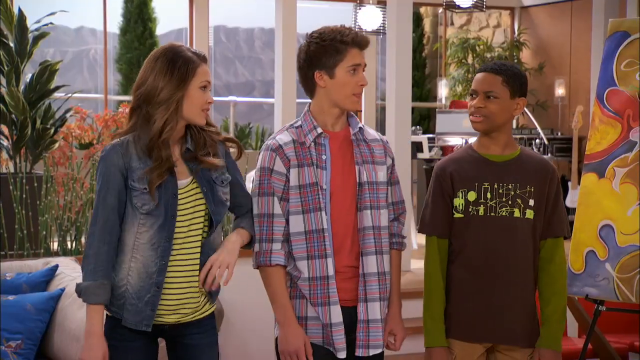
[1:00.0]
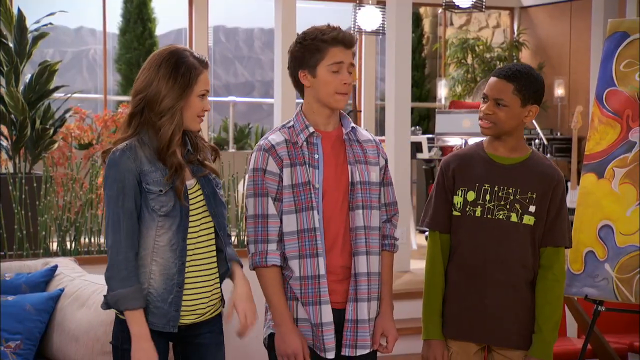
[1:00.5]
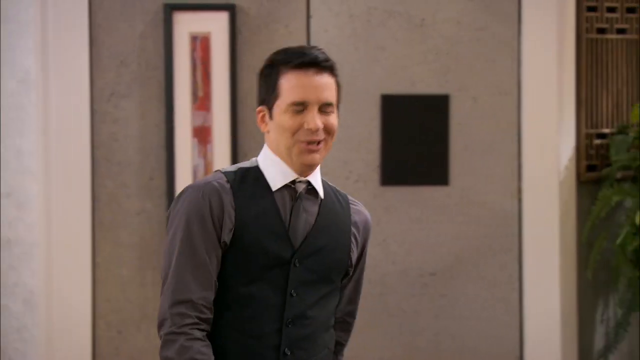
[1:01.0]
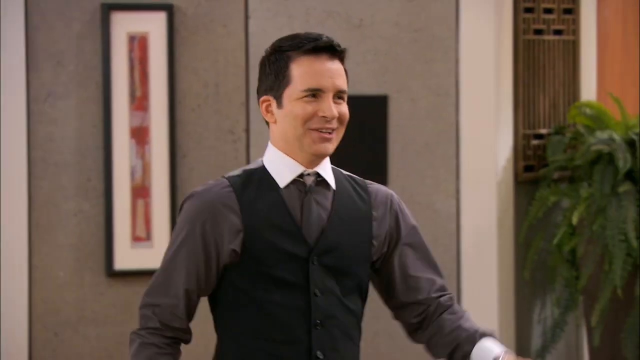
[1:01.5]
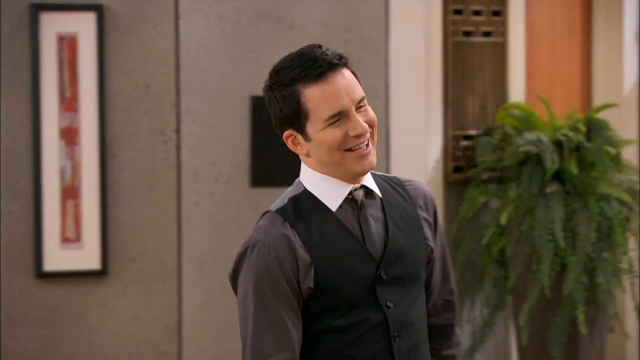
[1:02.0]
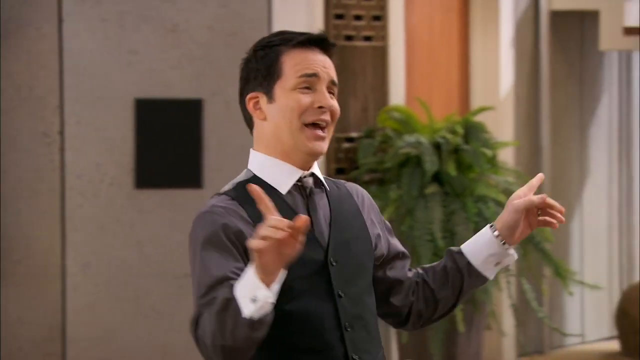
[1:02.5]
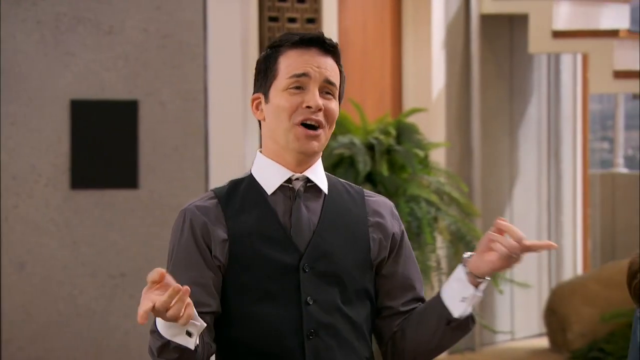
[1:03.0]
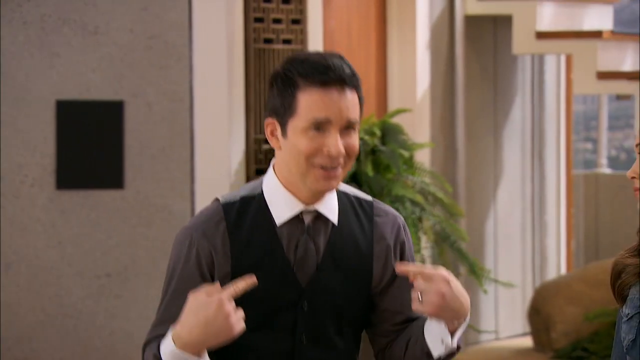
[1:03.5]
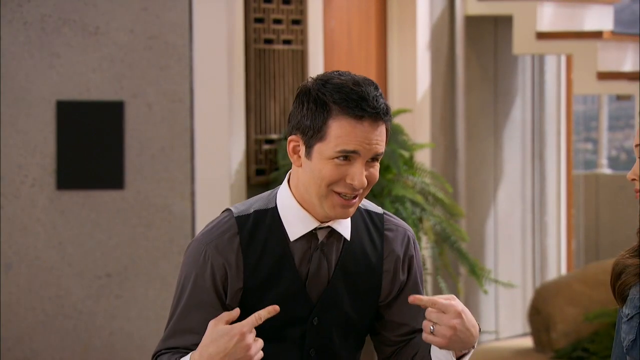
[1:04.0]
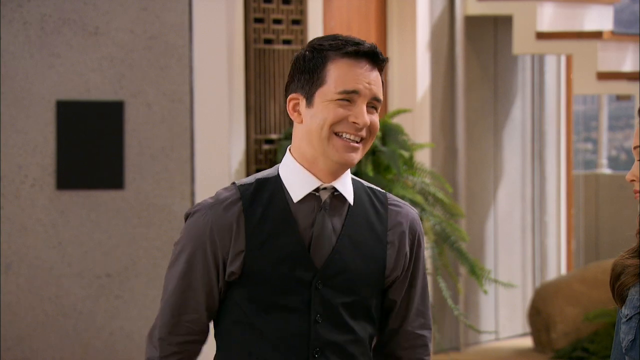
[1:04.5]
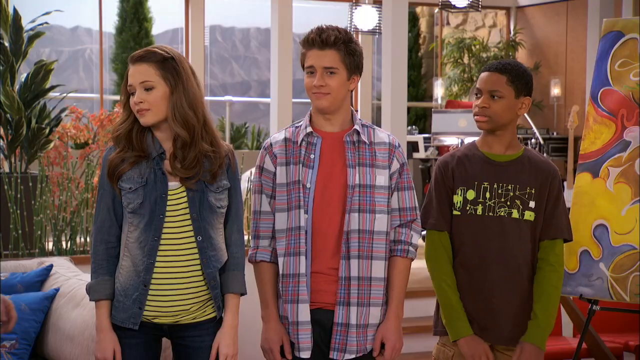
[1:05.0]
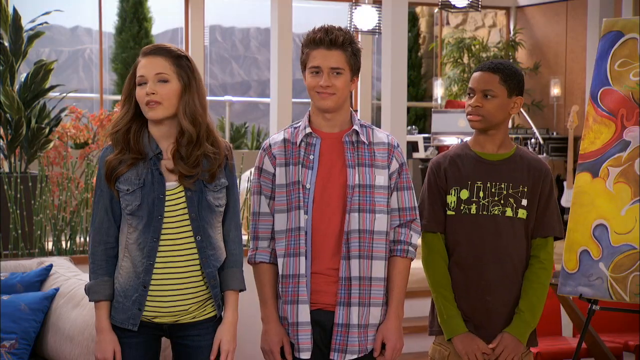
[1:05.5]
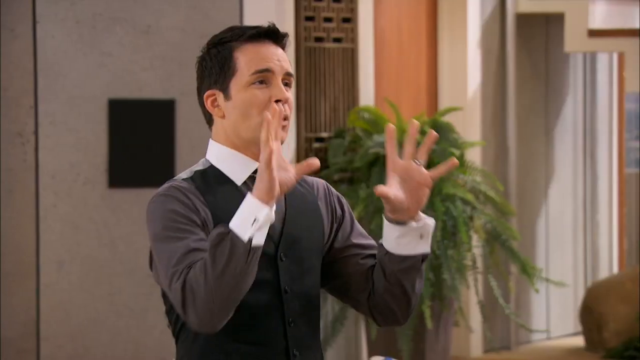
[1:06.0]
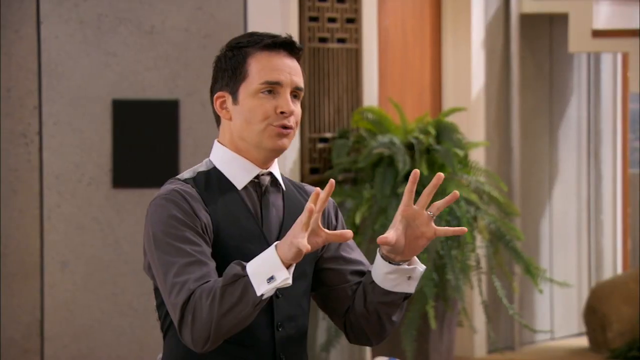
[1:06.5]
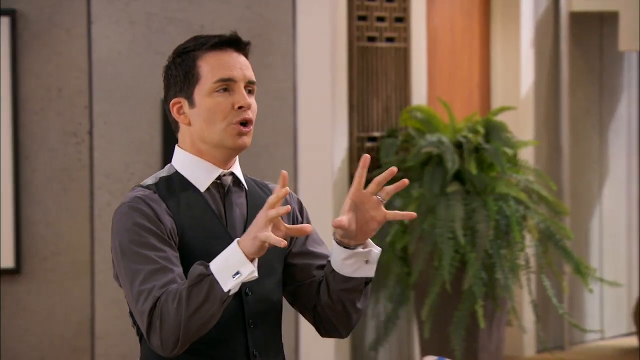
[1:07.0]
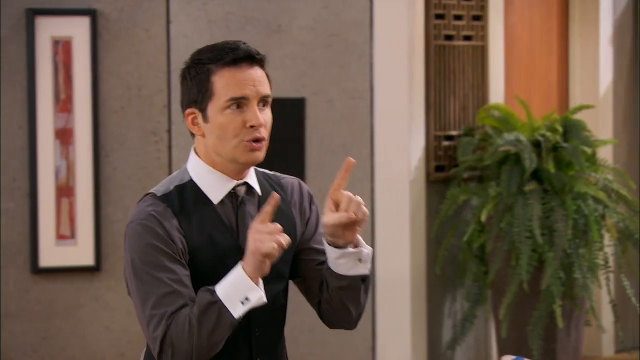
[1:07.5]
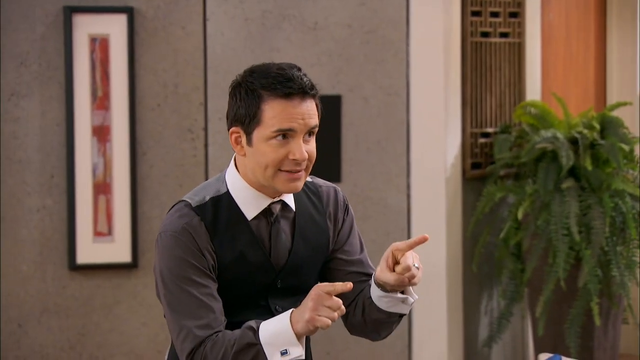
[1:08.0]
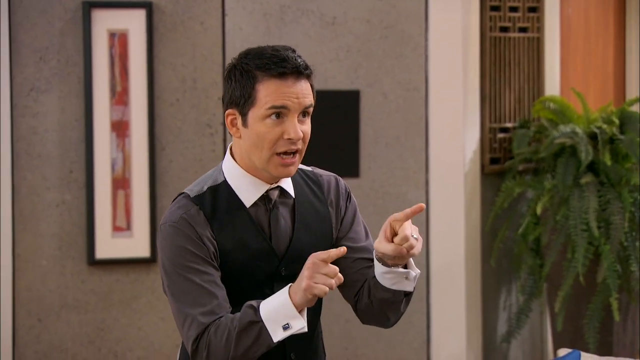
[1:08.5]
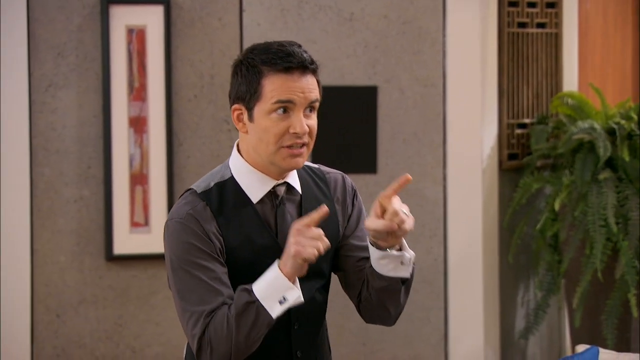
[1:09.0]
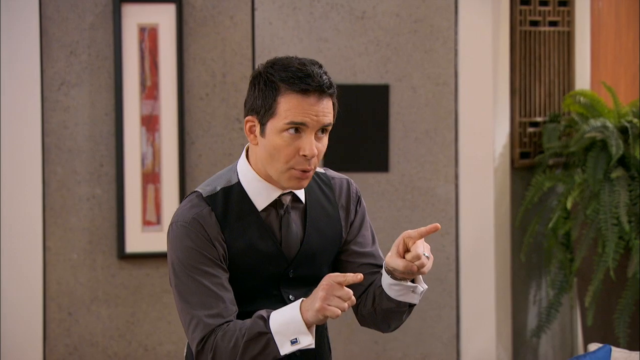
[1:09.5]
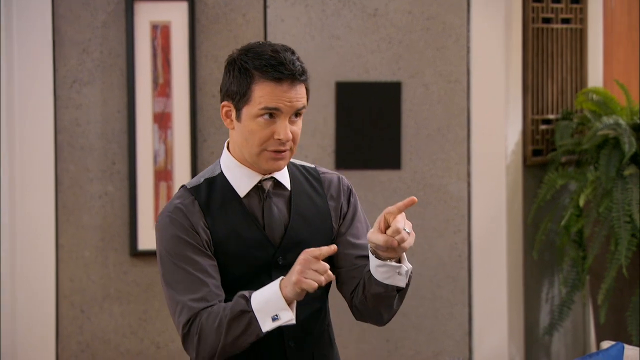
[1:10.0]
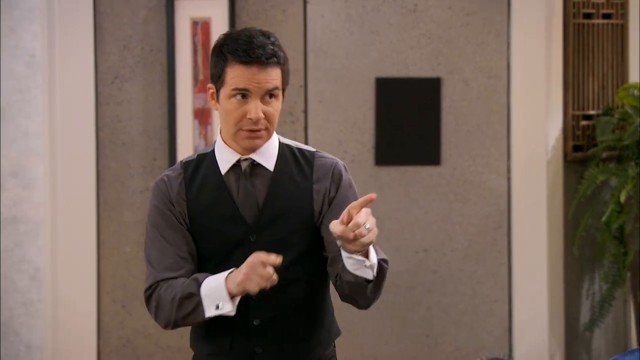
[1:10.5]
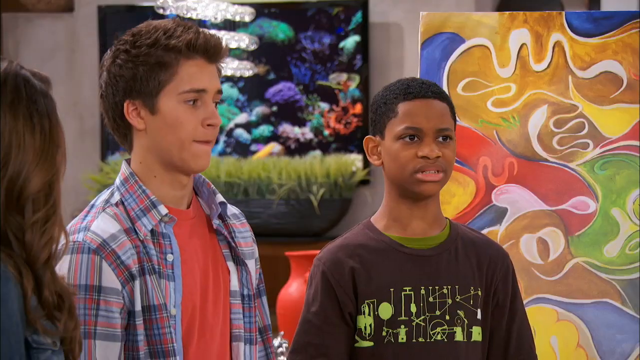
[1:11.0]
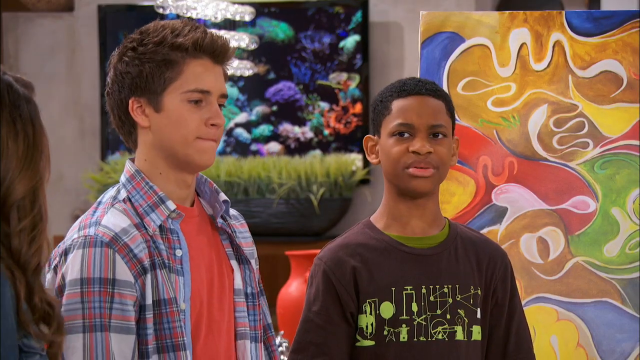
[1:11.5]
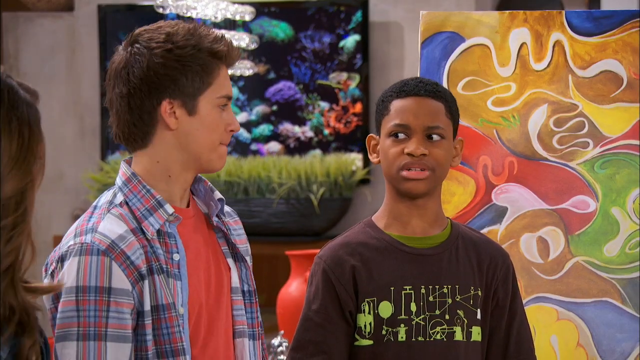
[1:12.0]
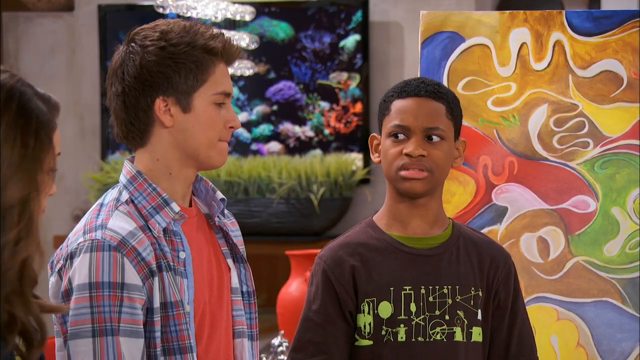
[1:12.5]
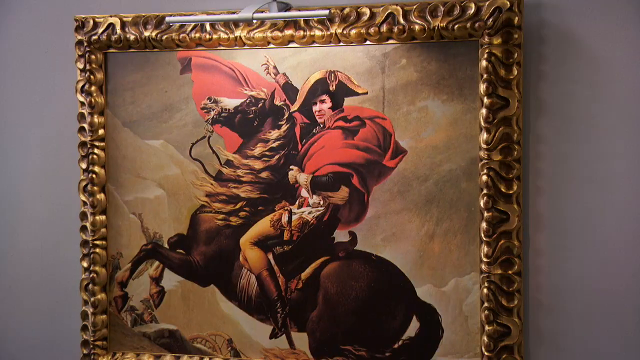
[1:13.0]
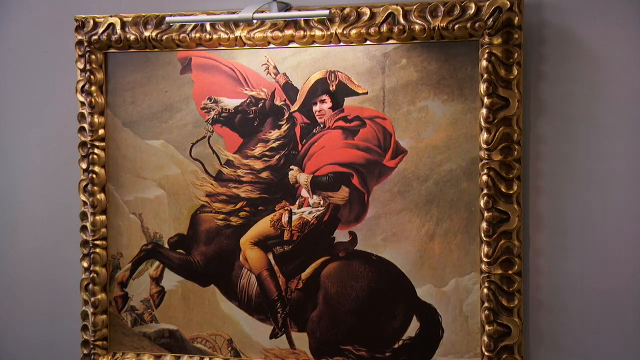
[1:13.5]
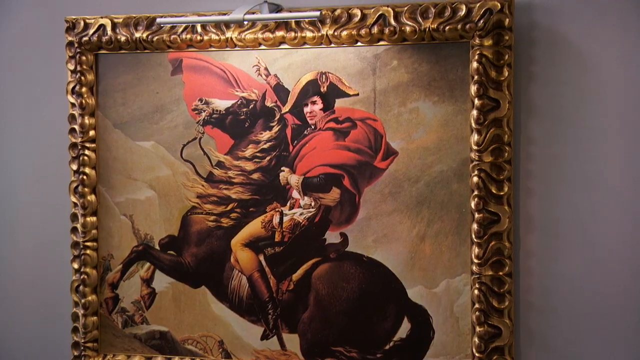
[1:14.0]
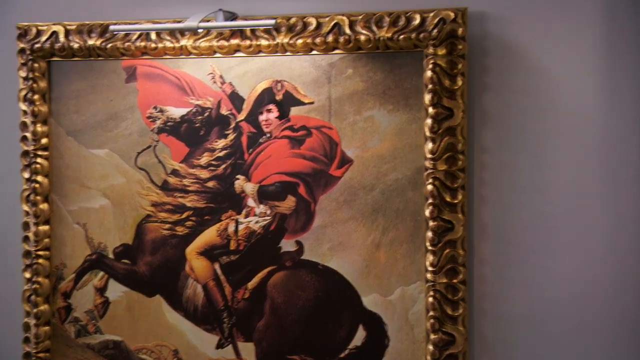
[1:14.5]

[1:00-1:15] As the man walks across the room away from the young man and the three teenagers, the teenagers talk among themselves, gesturing at each other and at the painting. They look across as the man reenters the room to answer their questions, gesturing with his hands. His shirt is mostly gray with white cuffs and collar, and his tie and vest are black. Behind him are gray elevator doors and a fern. The camera turns to show the black young man standing in front of the large easel with the colorful painting. Behind them are mountains and cityscape-like views and a patio. On a table behind him are a fish tank and decorative grass, and a small staircase leads to another level of the room. In the back right is either bar or musical equipment. The video then cuts to what looks like a gallery. On the wall is a painting of a man in the style of Napoleon, wearing a half-moon hat, a uniform jacket and a large bright red cape, sitting on a horse that is reared backward.